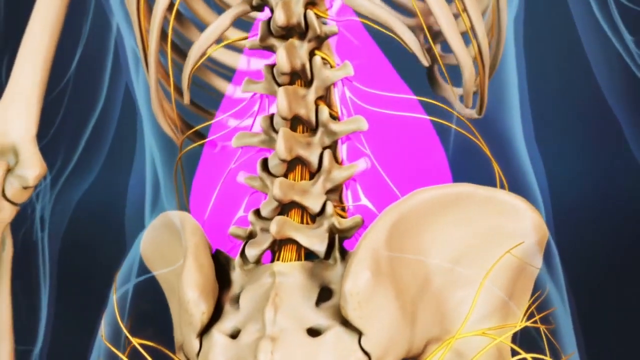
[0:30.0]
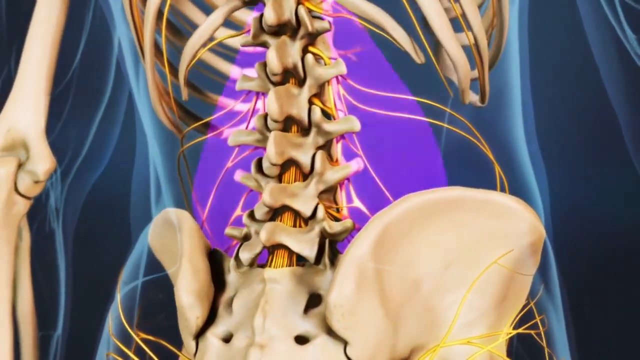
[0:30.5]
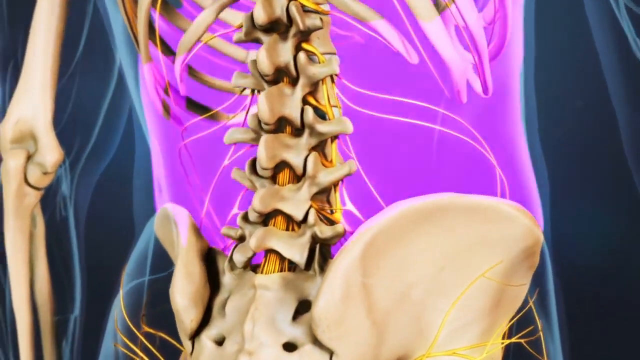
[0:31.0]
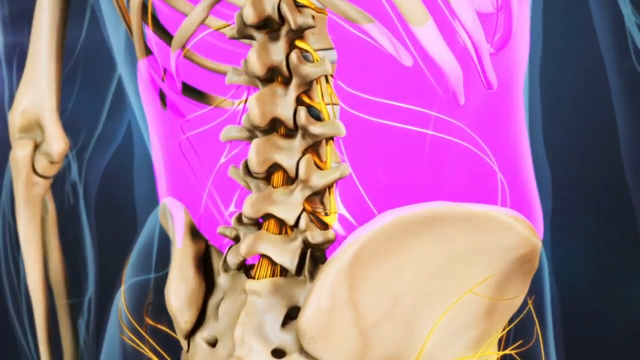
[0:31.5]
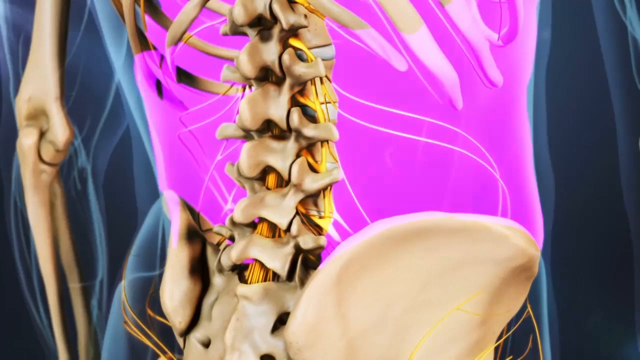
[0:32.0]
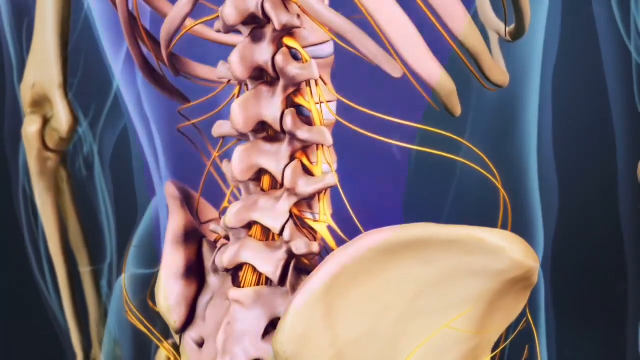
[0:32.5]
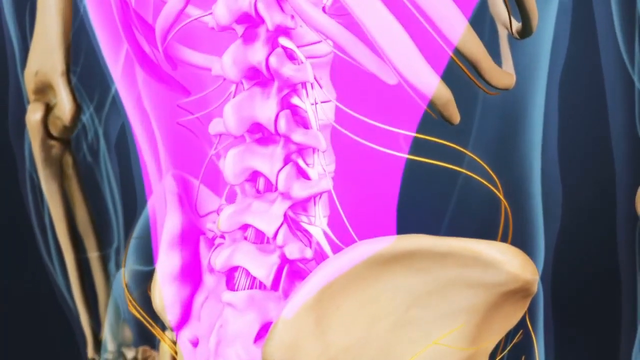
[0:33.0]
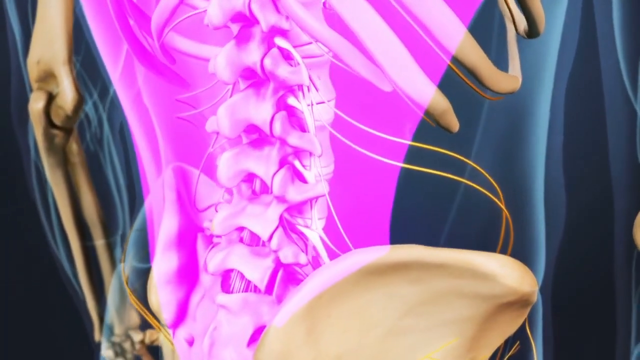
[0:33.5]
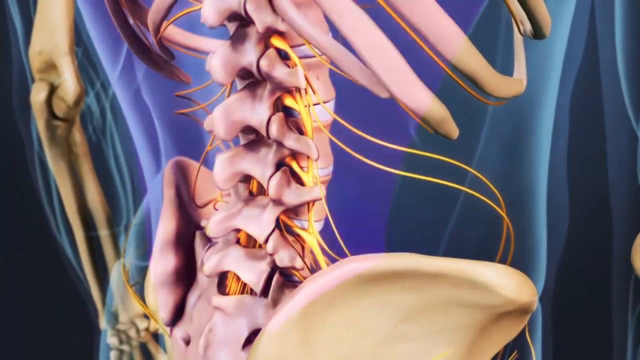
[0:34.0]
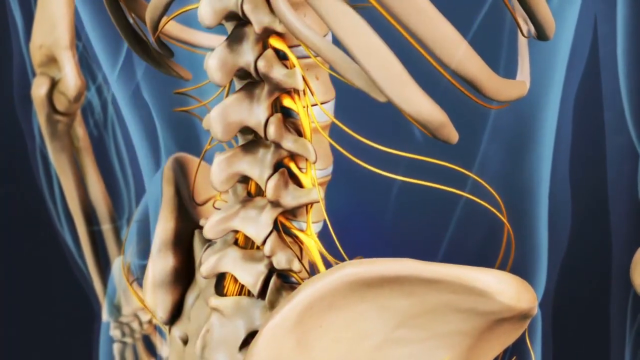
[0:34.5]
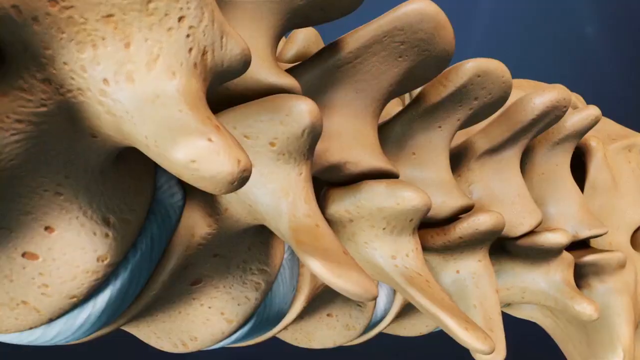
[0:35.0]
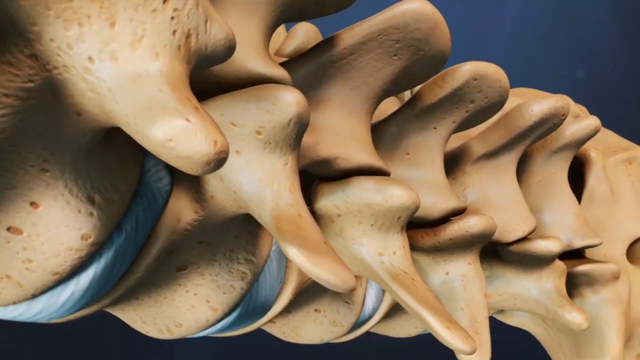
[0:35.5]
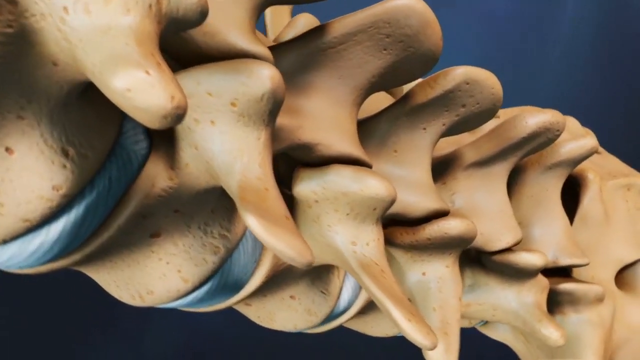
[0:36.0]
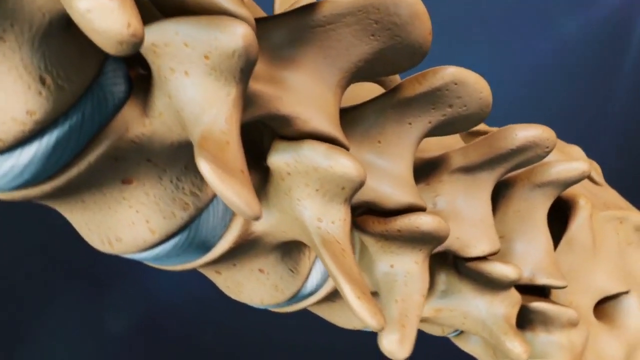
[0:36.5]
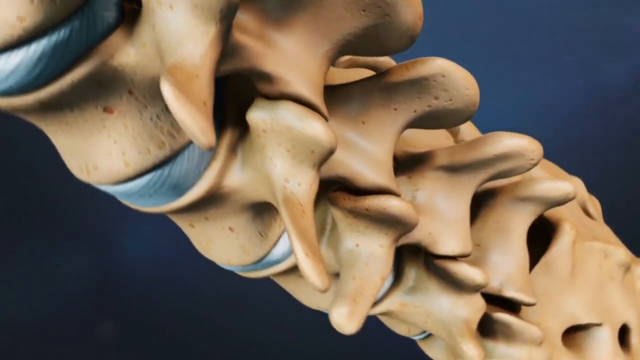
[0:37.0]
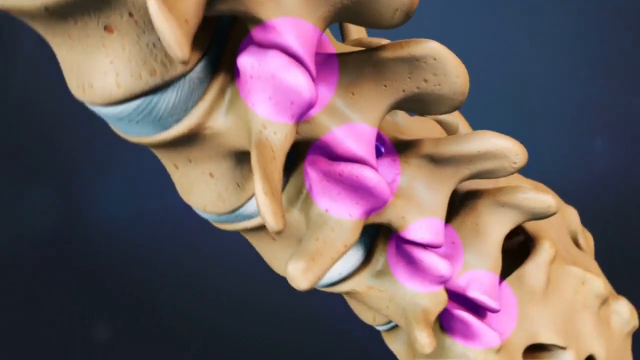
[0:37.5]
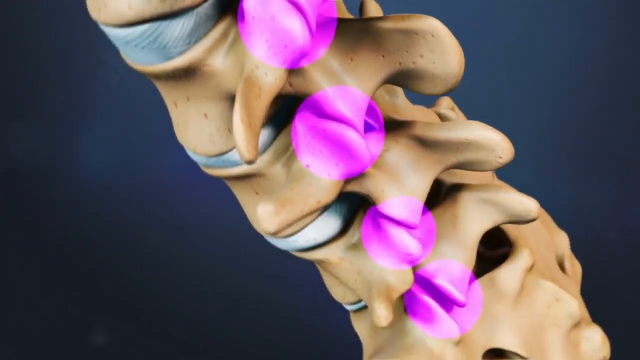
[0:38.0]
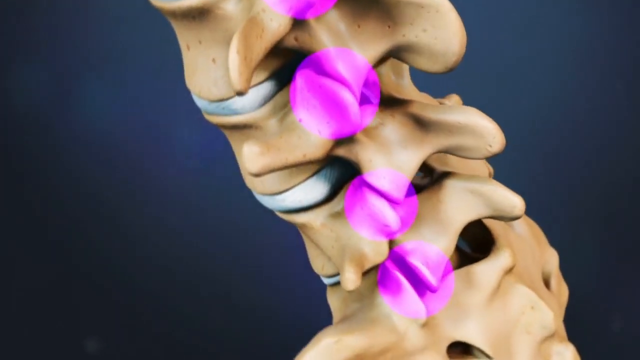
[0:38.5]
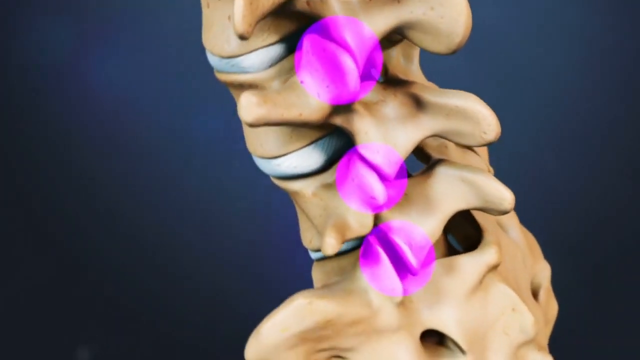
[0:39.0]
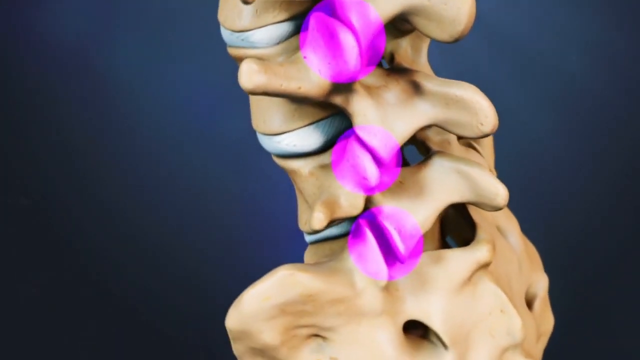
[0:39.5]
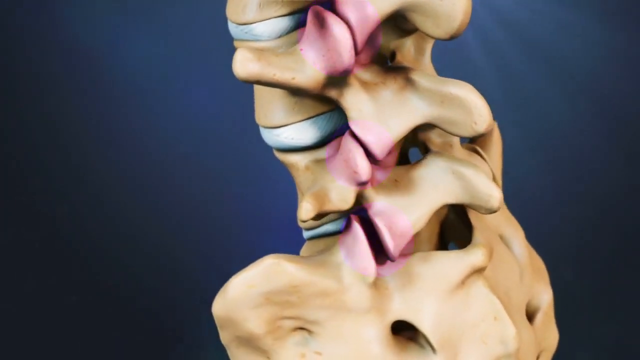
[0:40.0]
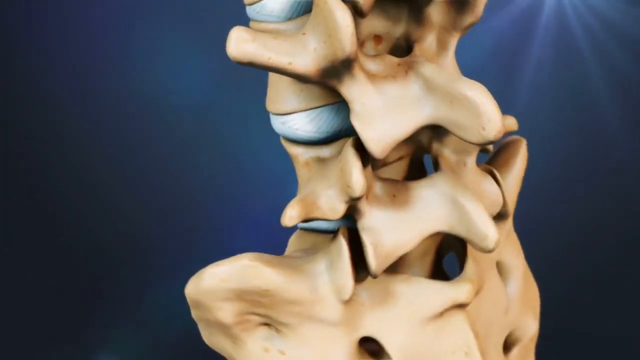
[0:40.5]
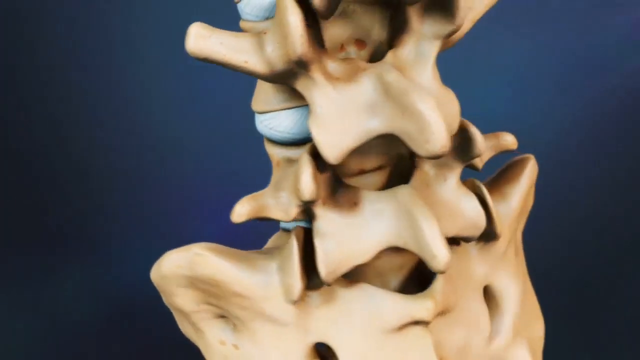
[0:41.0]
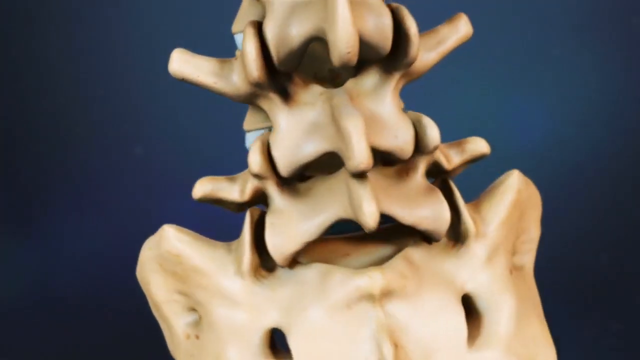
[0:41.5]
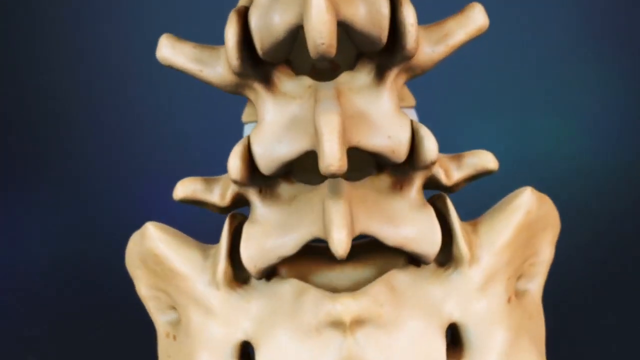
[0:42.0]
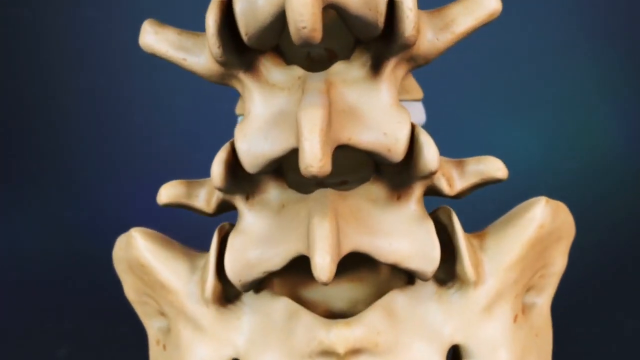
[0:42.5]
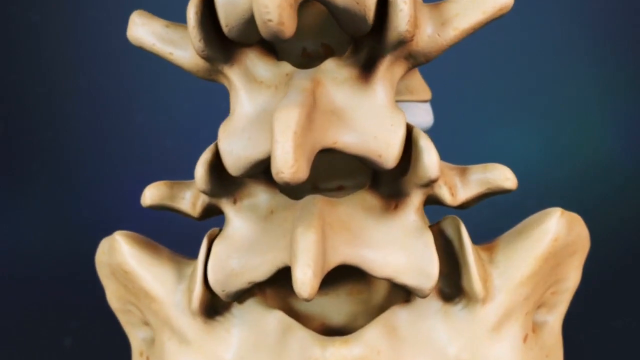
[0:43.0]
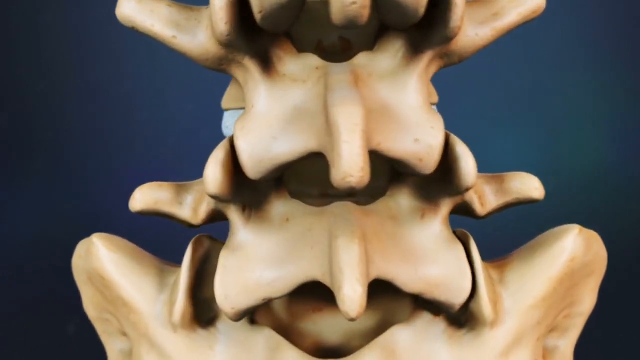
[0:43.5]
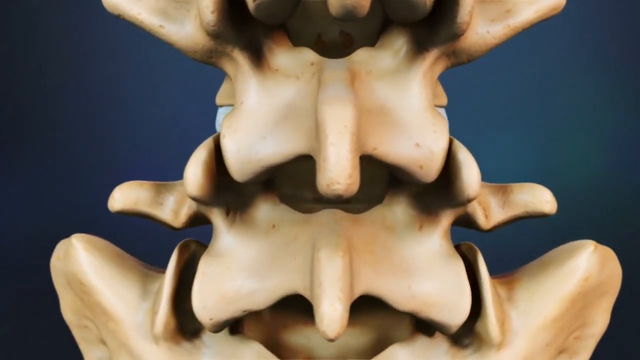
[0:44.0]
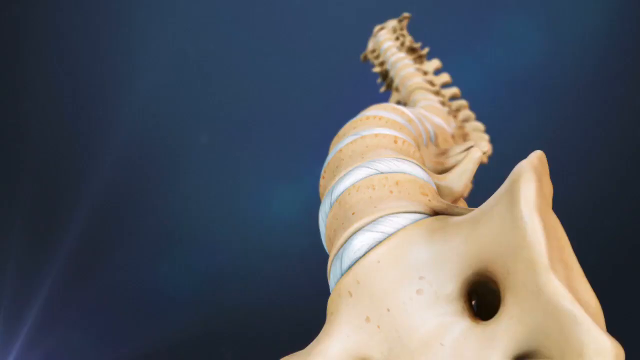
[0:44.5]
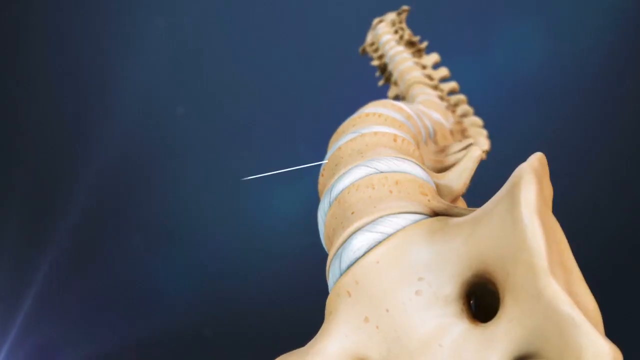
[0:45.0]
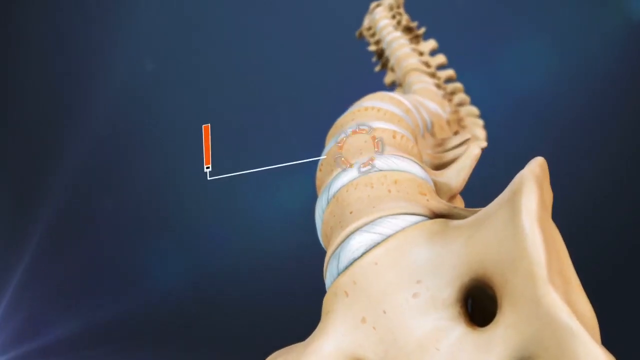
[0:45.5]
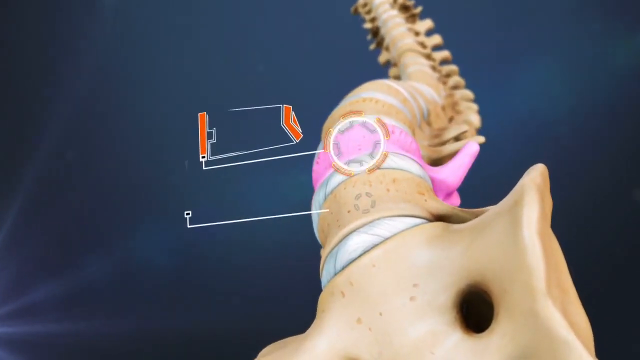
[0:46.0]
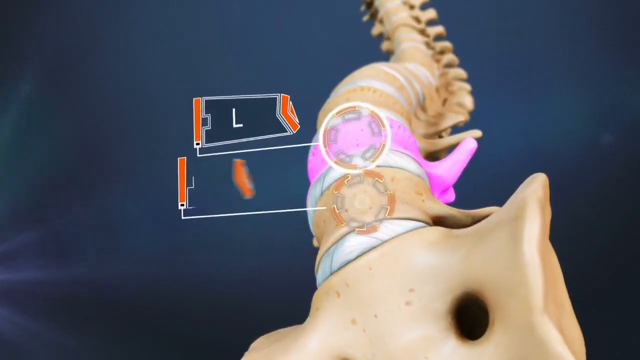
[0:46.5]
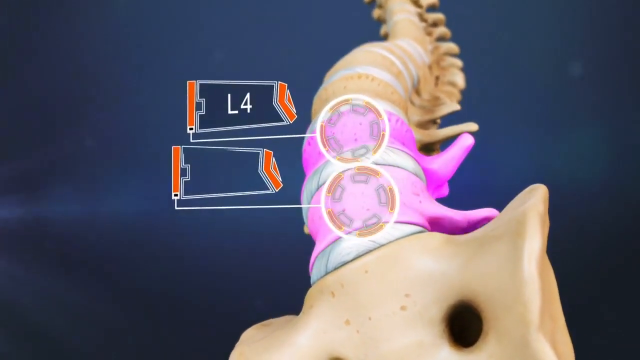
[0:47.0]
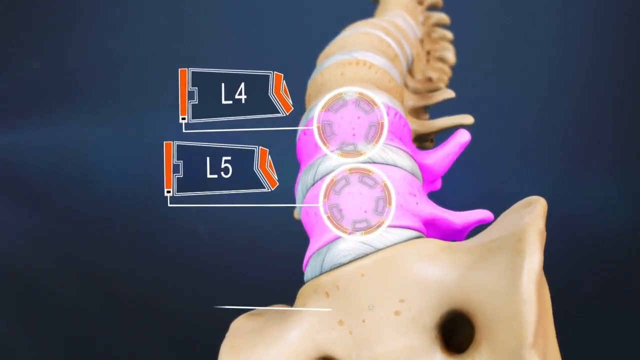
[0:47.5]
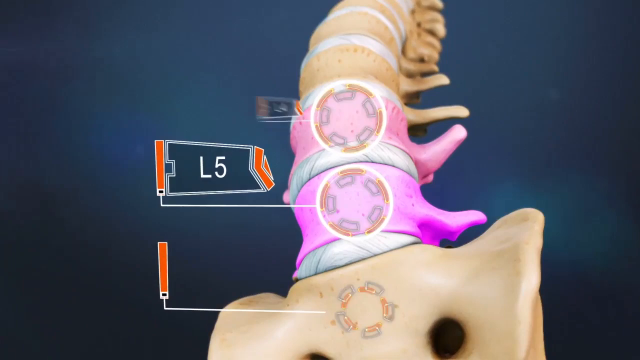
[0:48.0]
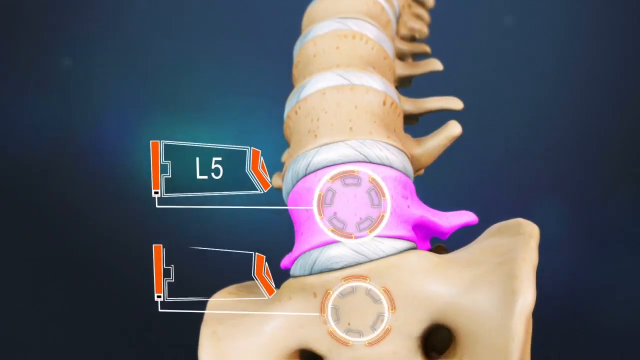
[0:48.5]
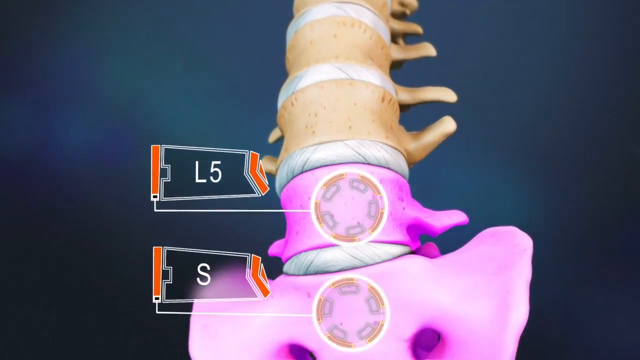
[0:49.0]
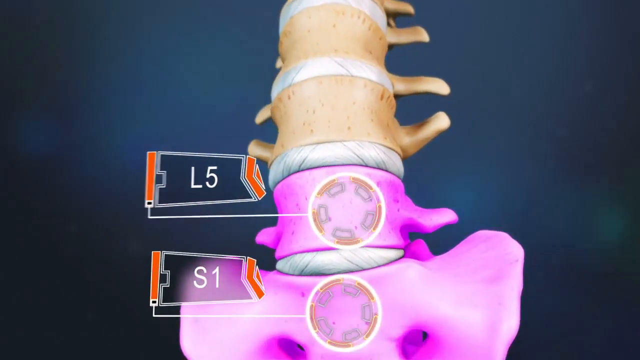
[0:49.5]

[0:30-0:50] The view slowly pans up the body, looking at the spinal area, with pink light highlighting areas of the spine. The pink light flashes along the spine, and then the view cuts to the upper portion of the spine, where pink circles highlight areas where the spine bones are fused. The view moves up with labels for L4, L5 and S1. Various bones are visible, off-white against the blue background, with bright white colors in between areas of the bone as the camera zooms and pans all over the skeleton. The pink lights glow in and out brightly, highlighting areas of the spine.